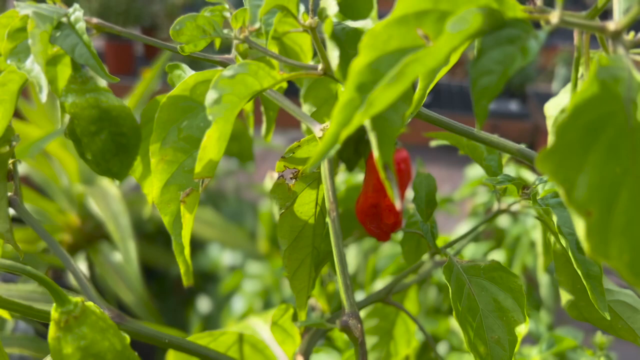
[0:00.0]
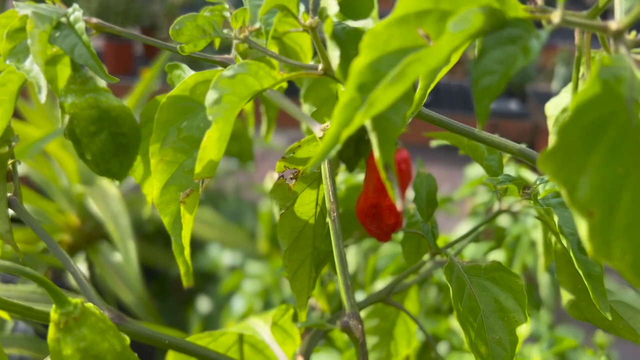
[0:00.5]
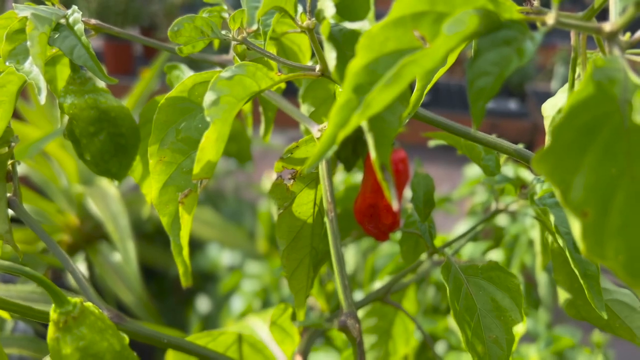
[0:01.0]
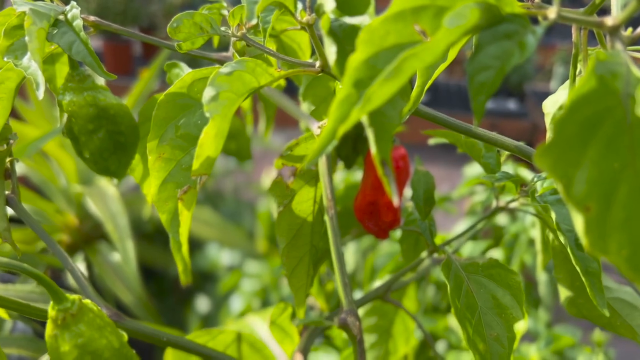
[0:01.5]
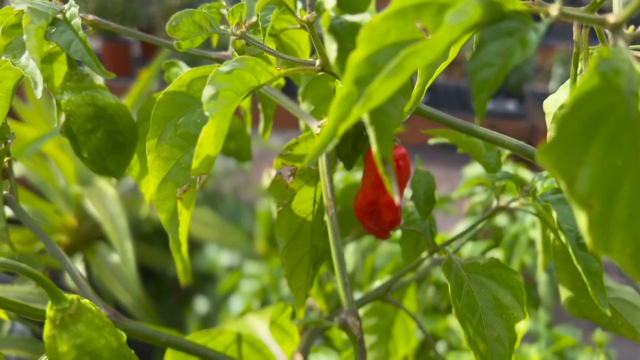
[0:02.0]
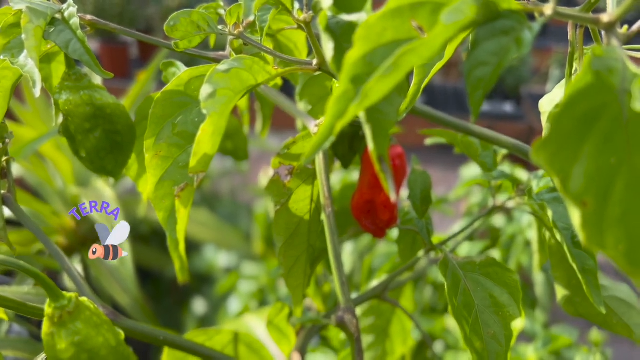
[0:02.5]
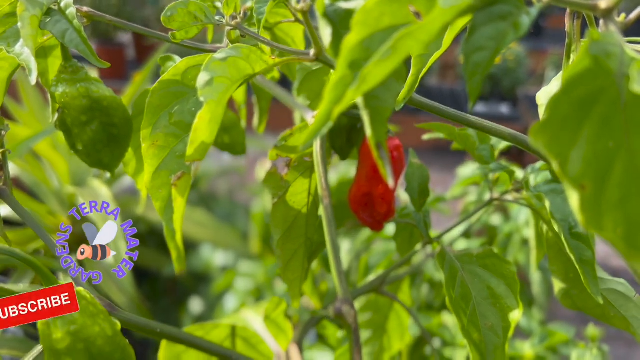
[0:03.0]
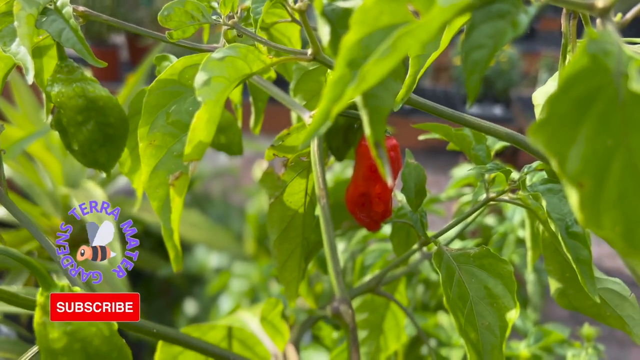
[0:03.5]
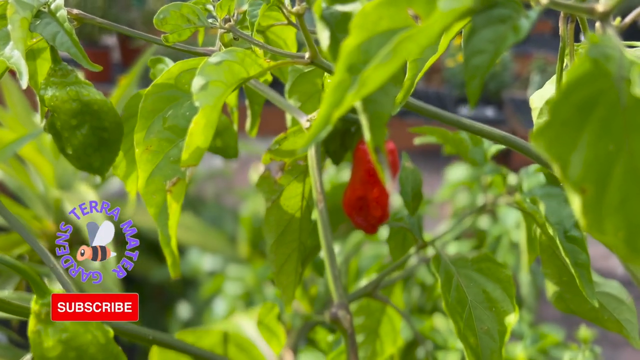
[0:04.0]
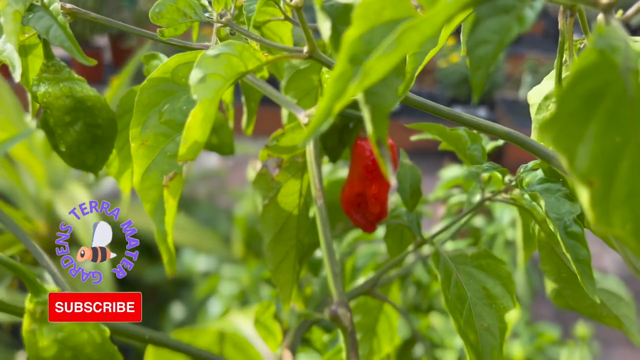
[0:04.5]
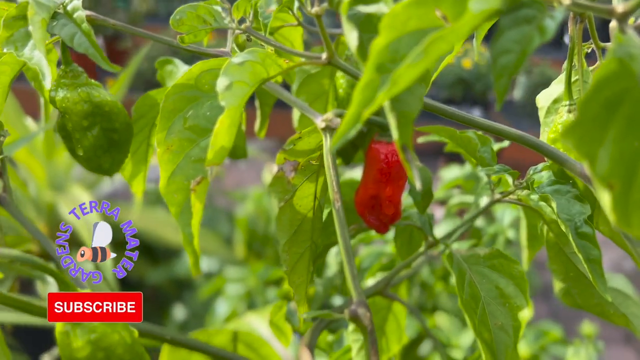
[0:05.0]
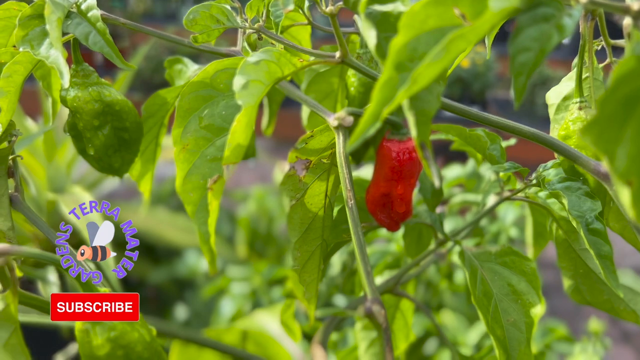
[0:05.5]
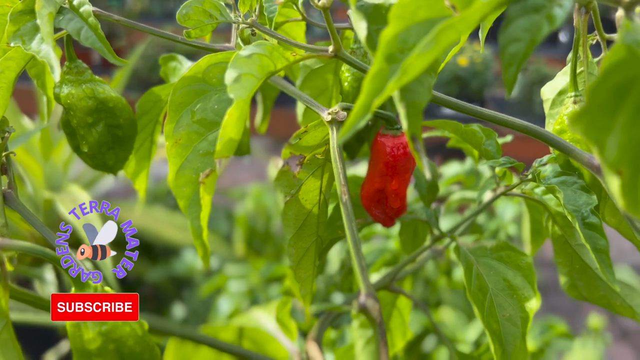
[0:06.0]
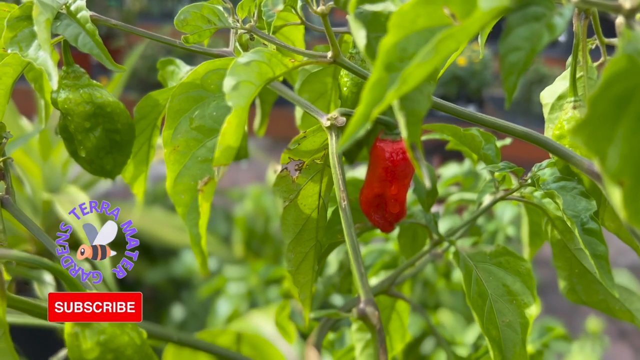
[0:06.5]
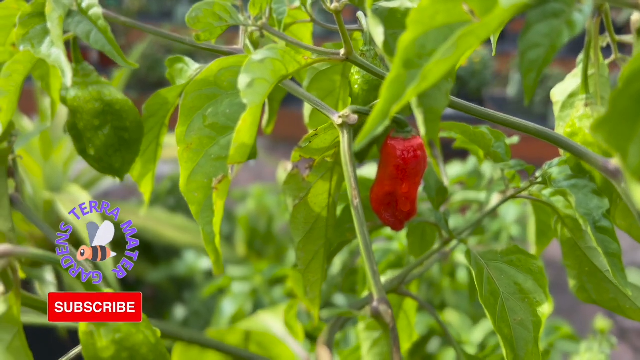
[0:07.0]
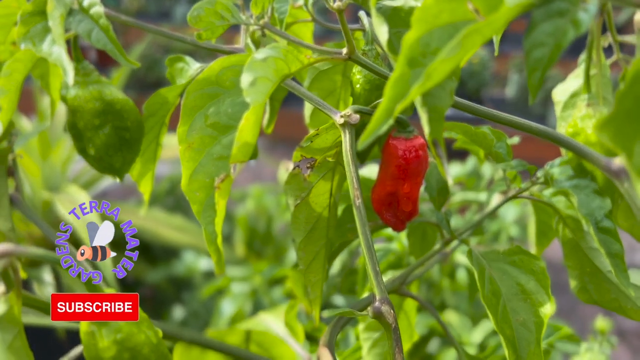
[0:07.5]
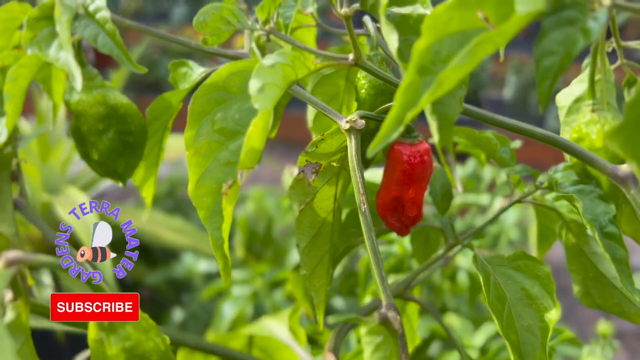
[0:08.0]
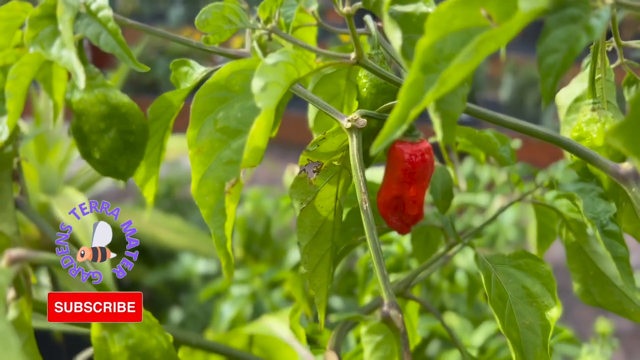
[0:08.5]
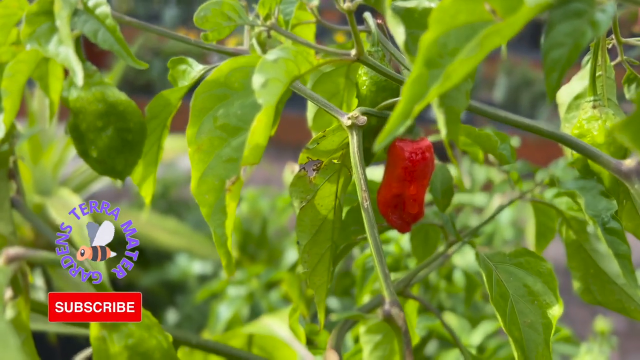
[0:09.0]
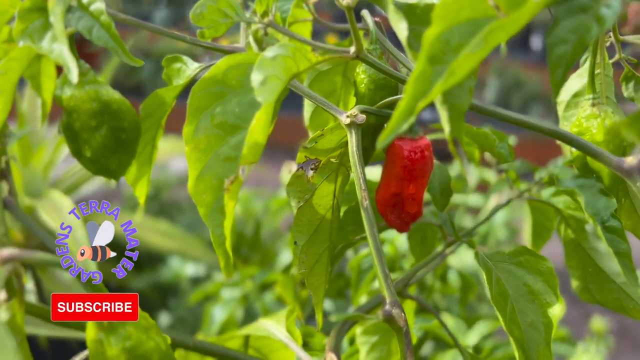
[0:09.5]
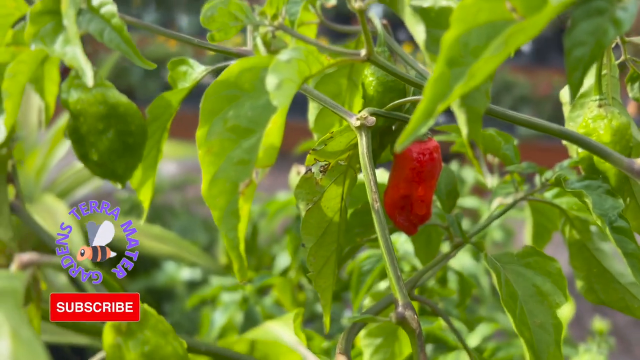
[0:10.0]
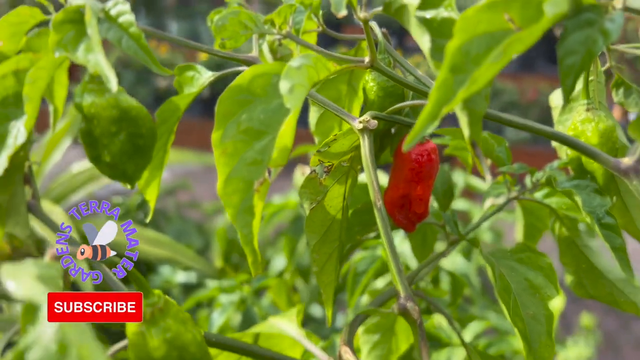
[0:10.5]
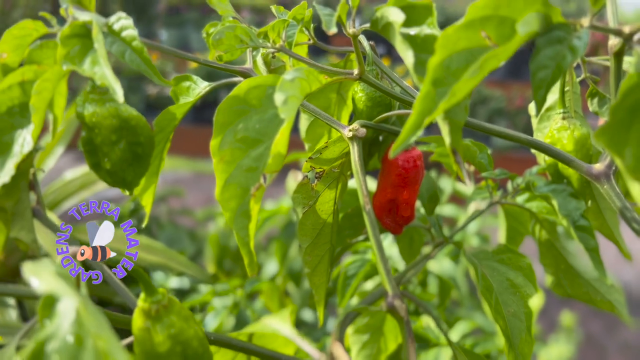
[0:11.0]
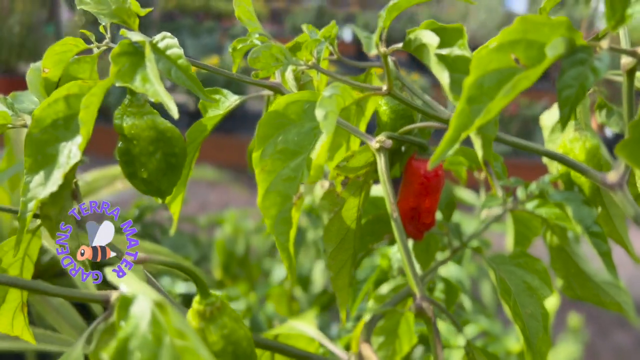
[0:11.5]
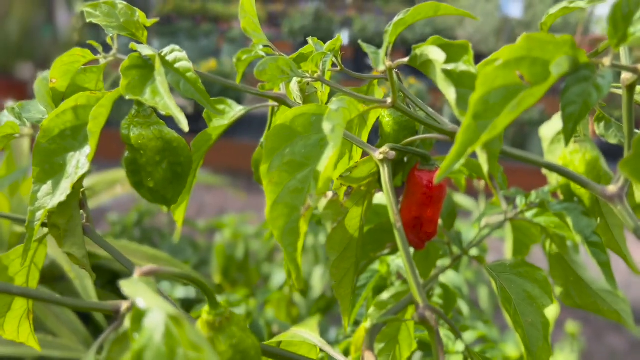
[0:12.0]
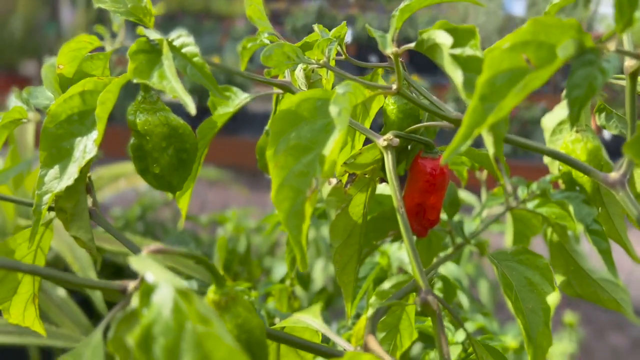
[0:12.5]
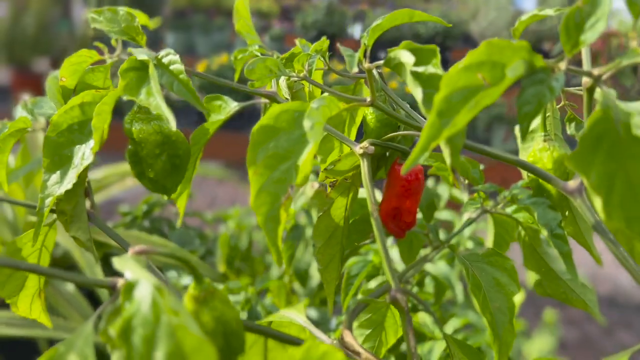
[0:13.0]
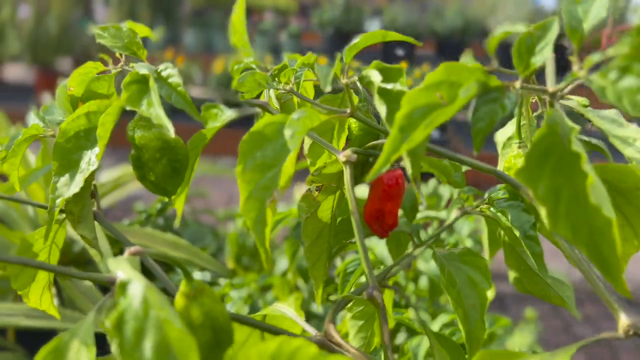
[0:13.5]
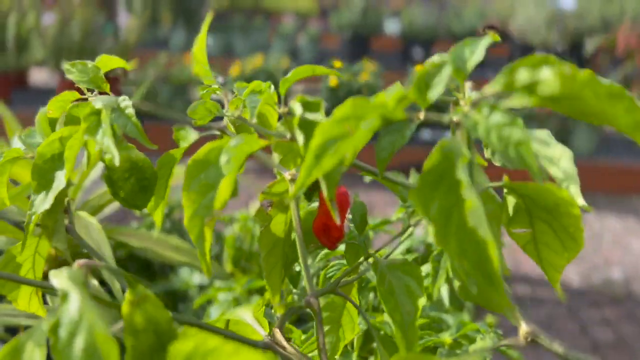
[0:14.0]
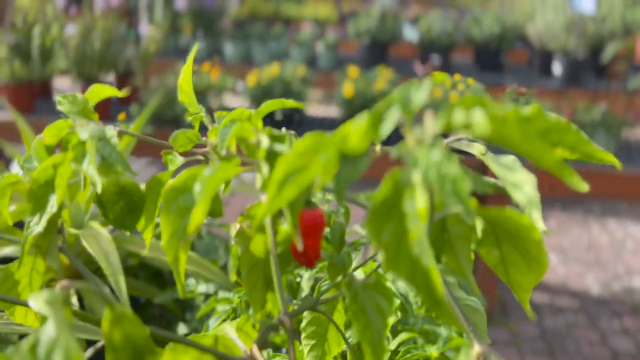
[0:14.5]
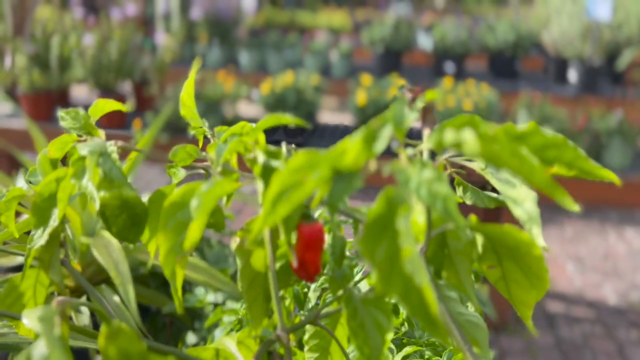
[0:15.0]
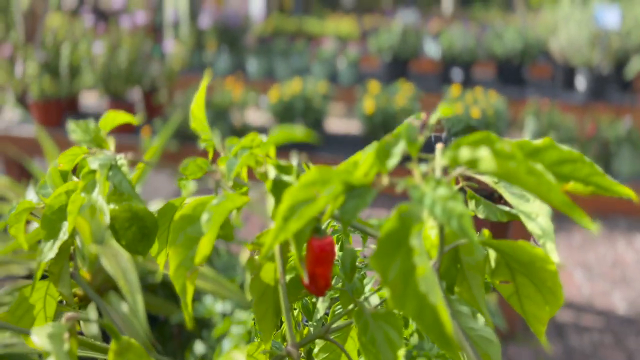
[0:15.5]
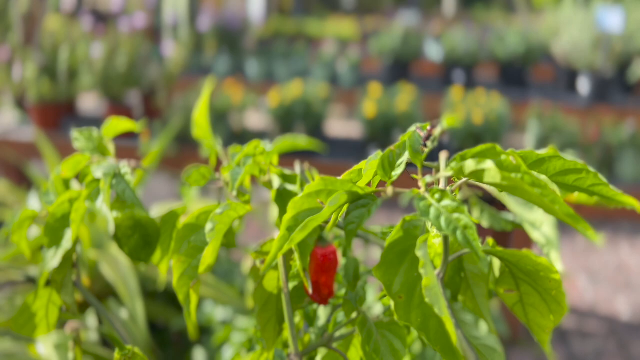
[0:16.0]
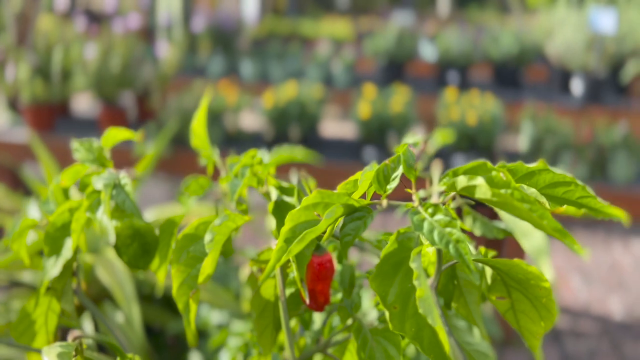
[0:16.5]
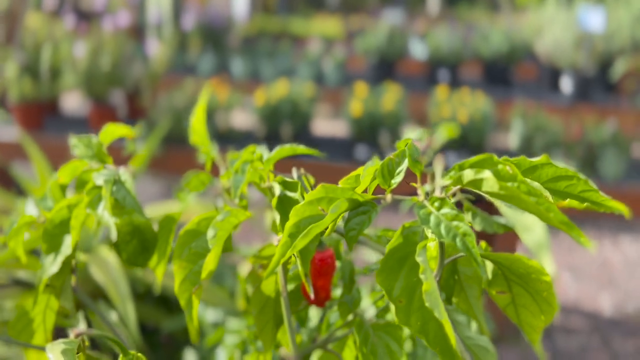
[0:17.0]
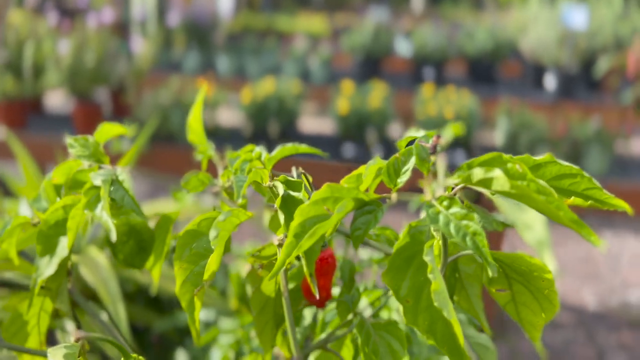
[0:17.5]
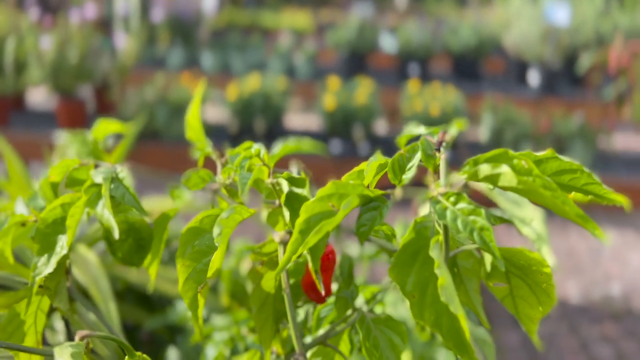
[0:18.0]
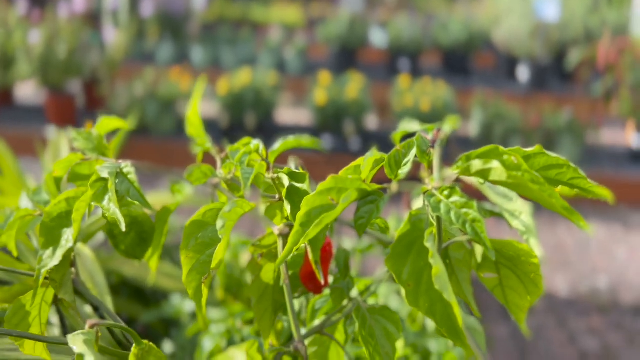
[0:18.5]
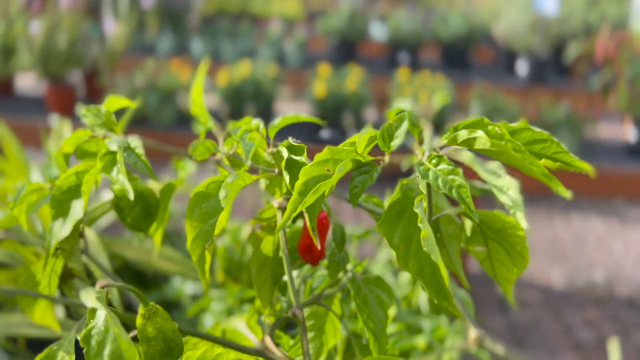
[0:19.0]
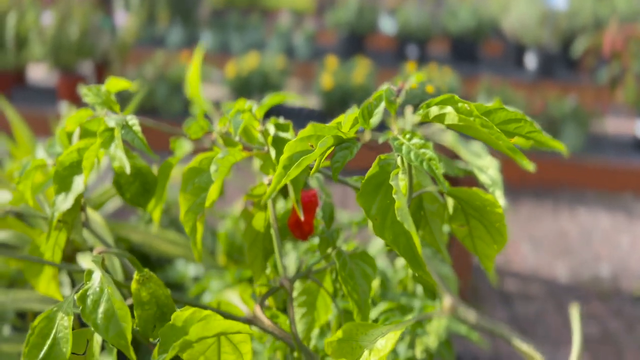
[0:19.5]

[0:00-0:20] The video opens on plants that appear to be some type of pepper plant, with green leaves and brown stems. A ripe red pepper hangs off one of the branches, and to the left of it is another pepper that is green and not ripe yet. The background is out of focus and blurry, but there might be a brown retaining wall in the back, along with other blurry plants. The rest of the shot stays up close on the pepper plant, and the sun is shining down onto it.